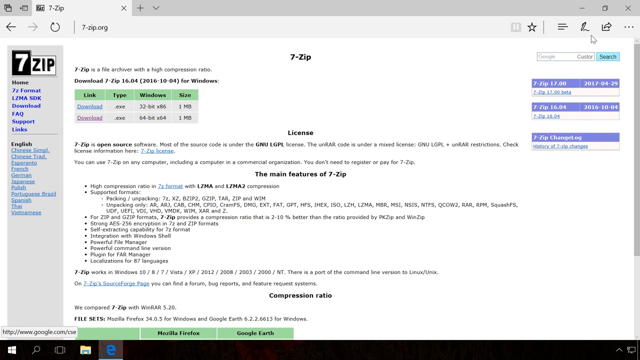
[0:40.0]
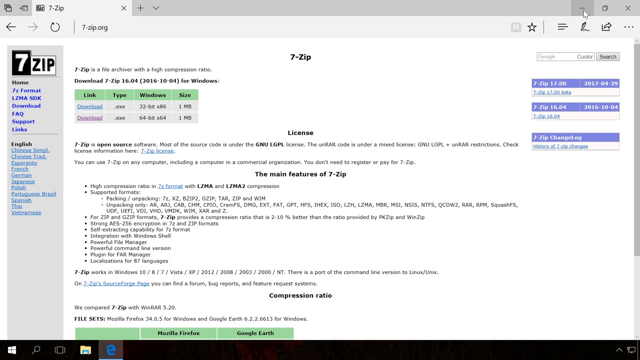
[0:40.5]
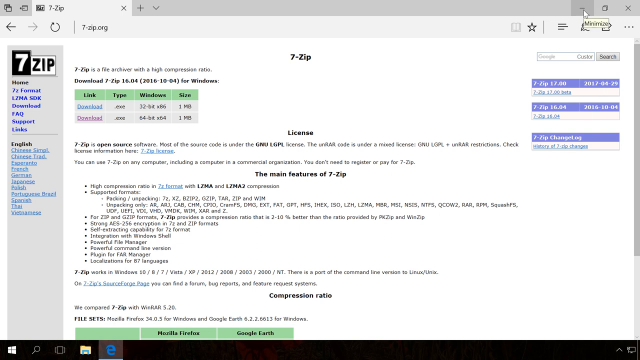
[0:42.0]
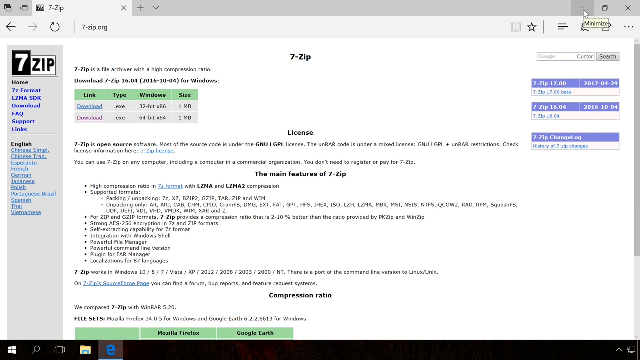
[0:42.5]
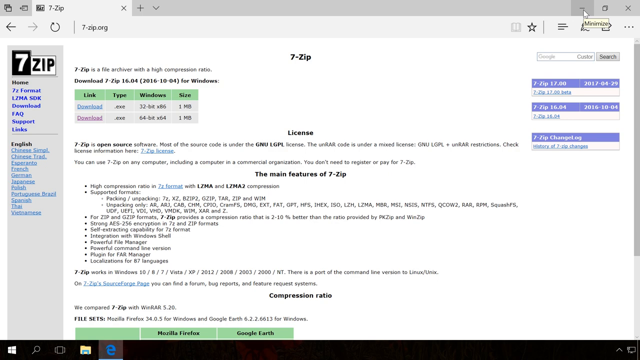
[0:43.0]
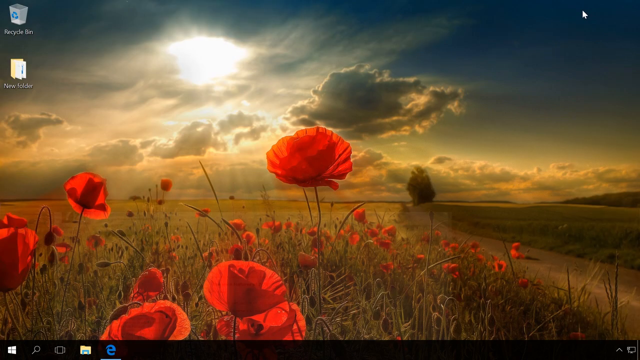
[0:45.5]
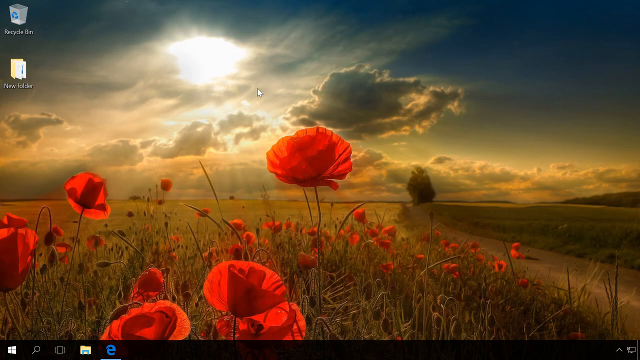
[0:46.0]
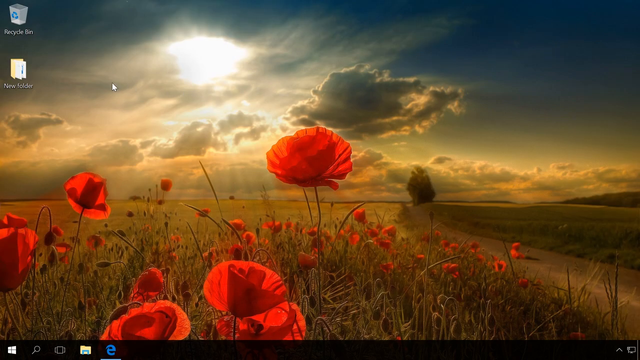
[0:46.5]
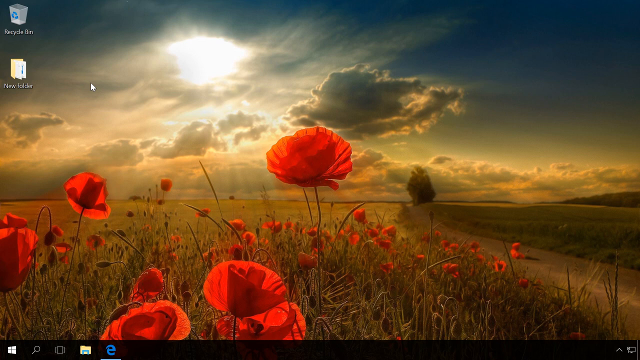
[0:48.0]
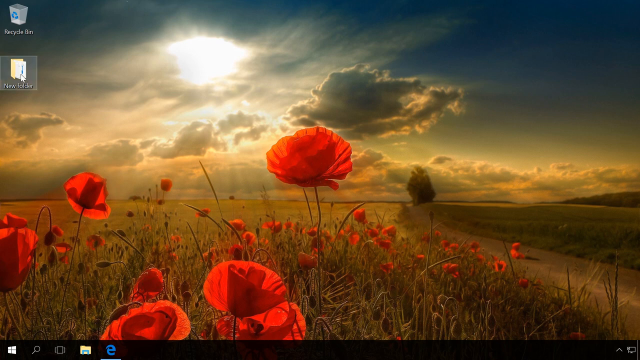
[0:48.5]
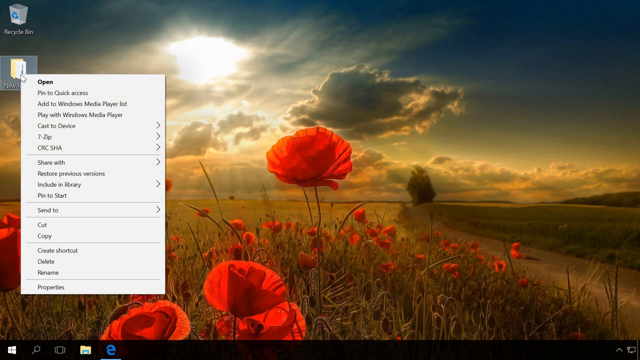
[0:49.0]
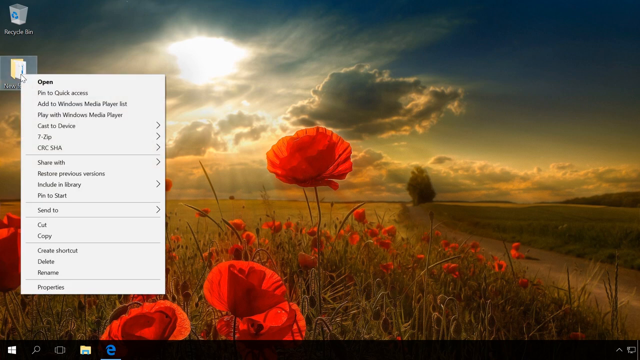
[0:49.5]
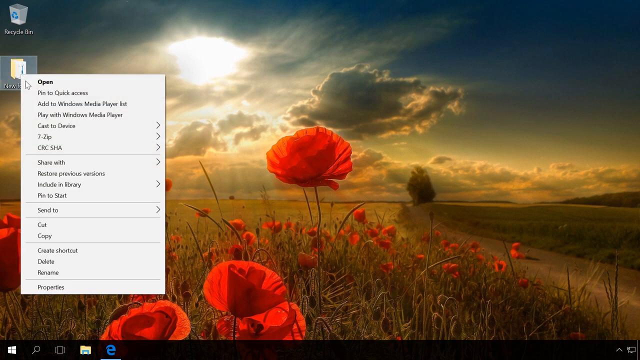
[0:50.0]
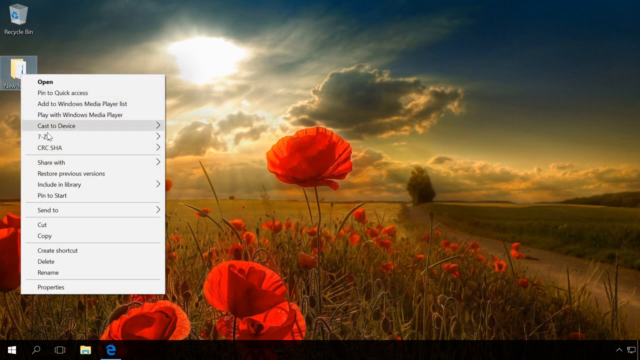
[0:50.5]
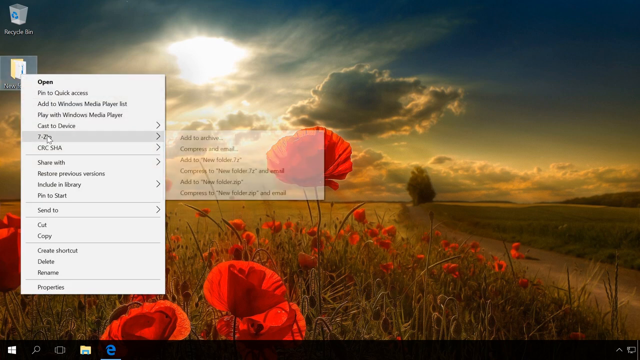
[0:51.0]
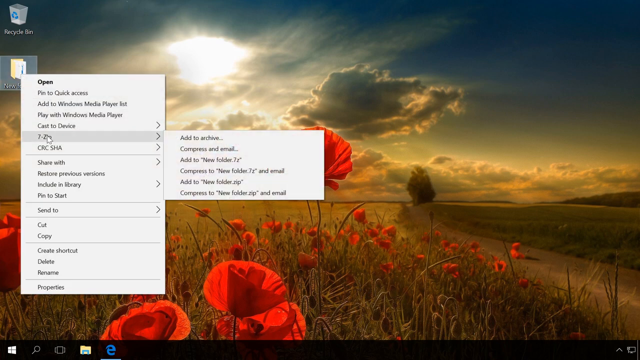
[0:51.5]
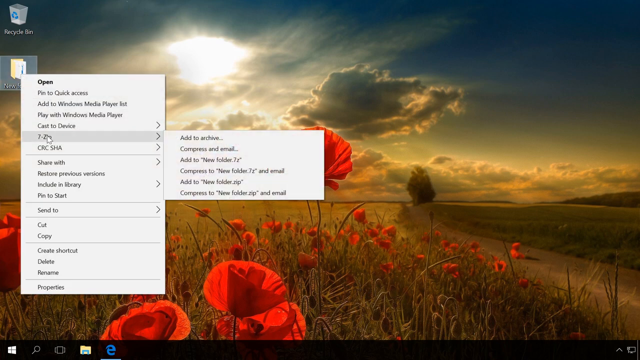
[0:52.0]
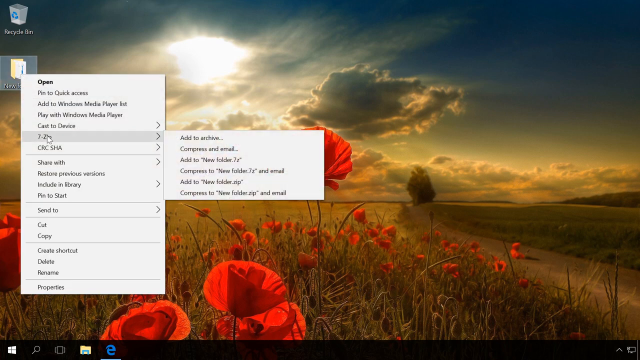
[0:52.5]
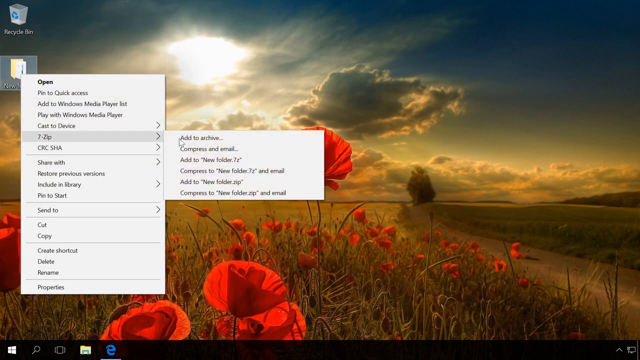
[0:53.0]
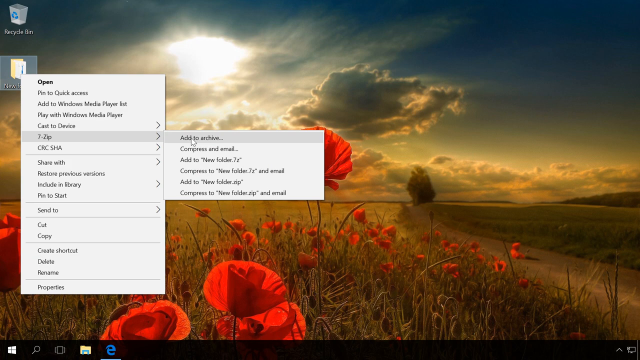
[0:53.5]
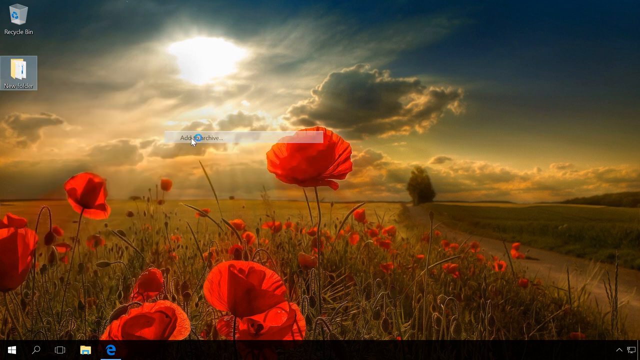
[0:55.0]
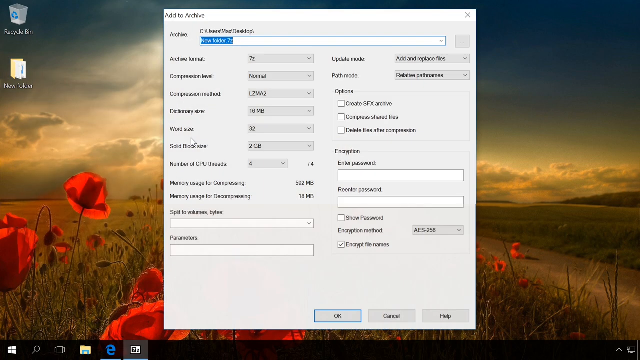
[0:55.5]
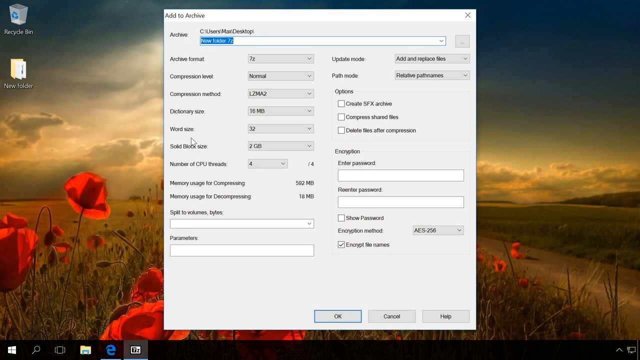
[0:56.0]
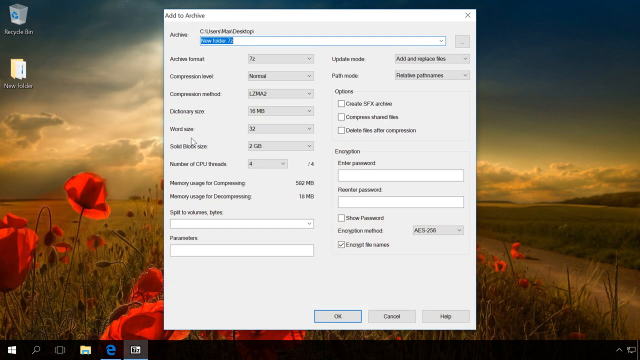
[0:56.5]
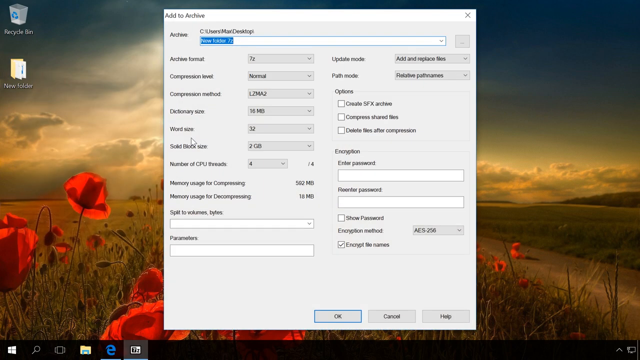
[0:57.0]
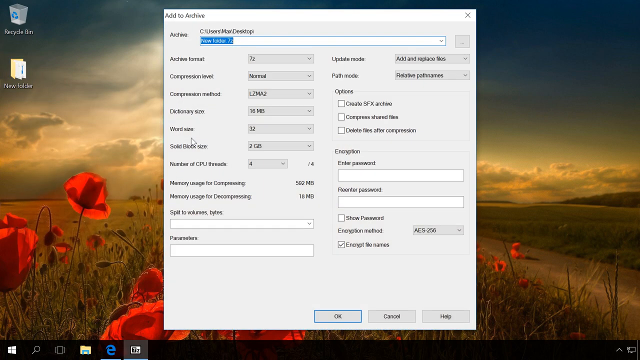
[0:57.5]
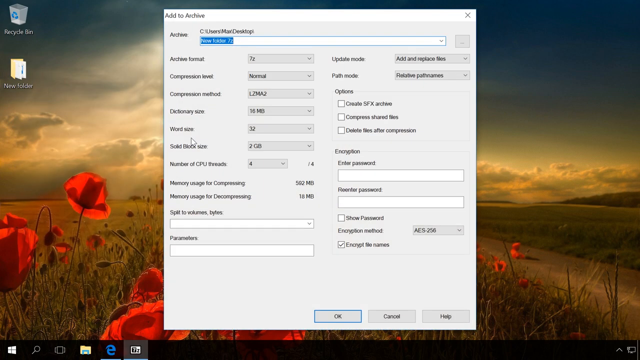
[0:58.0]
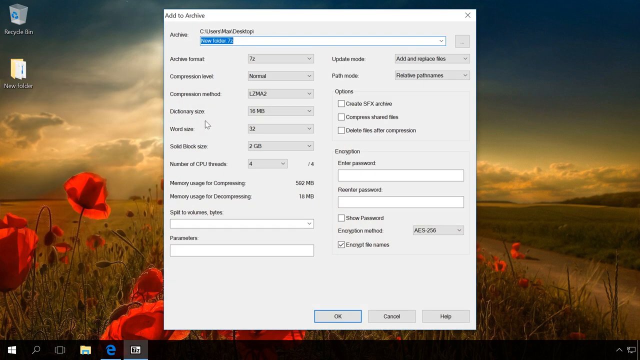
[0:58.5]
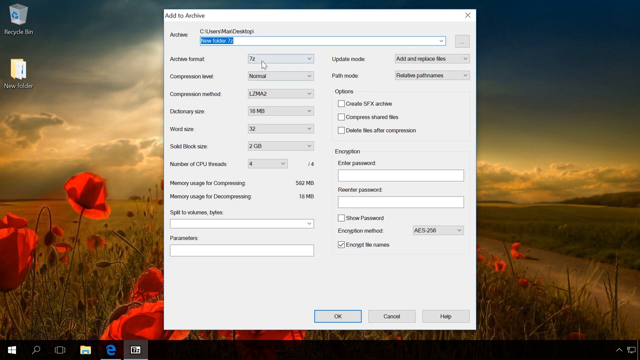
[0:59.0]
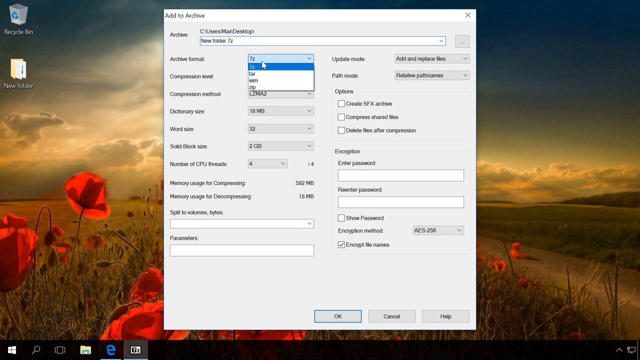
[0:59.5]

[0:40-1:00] The central part of the page starts with a central title, "7-zip". On the left side of this white central section, in black font, is "7-zip", and below it in a lighter gray font is "a file archiver with a high compression ratio". Below that, in darker font, is "download 7-zip 16.4 (2016-10-04) for Windows". A green bar follows with two download options, and the green bar has four headings: "Link", "Type", "Windows" and "Size". Further down the screen are more details. First is the word "License", centered under the top "7-zip", about halfway across the line of white space, with more information below it. The next subheading is "the main features of 7-zip", also centered, followed by lines of information reading from the left, until another centered subheading near the bottom of the screen: "compression ratio".